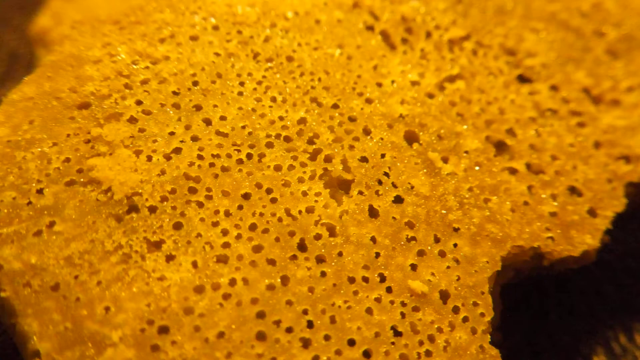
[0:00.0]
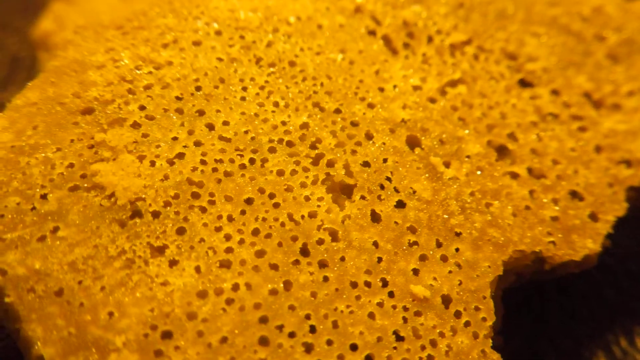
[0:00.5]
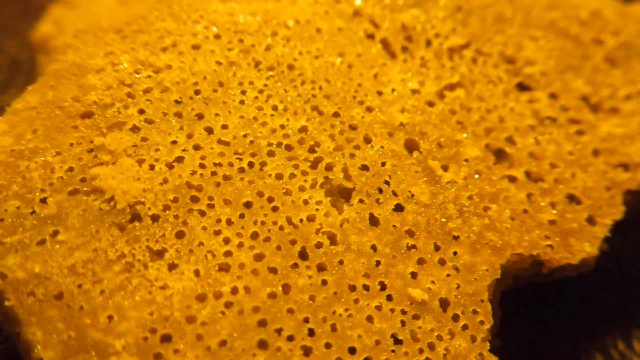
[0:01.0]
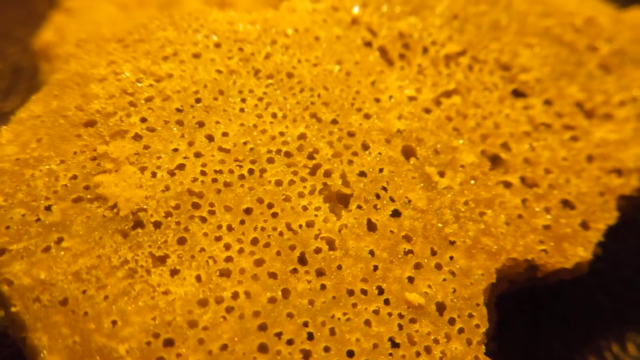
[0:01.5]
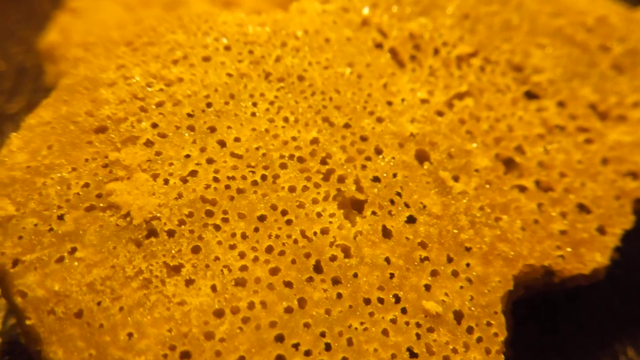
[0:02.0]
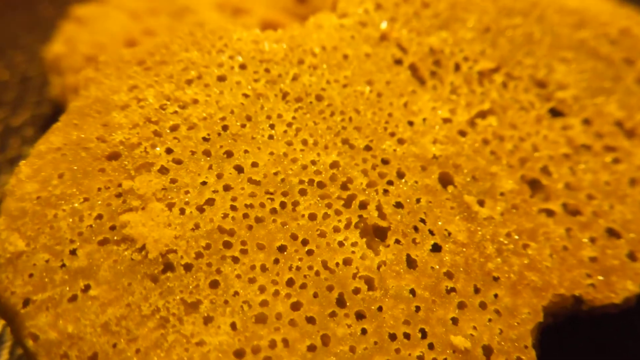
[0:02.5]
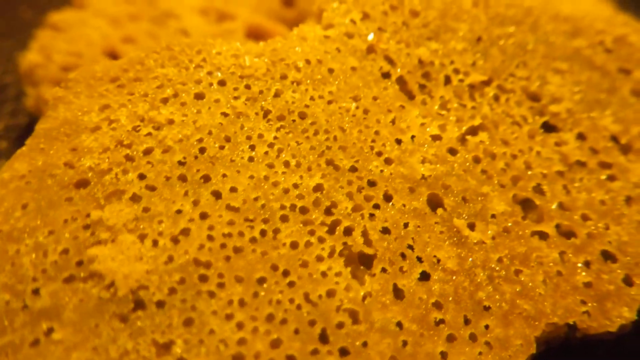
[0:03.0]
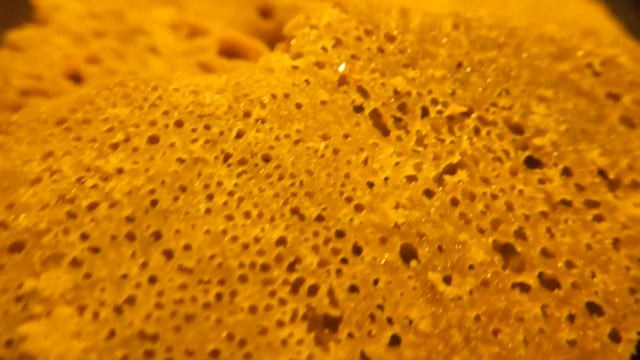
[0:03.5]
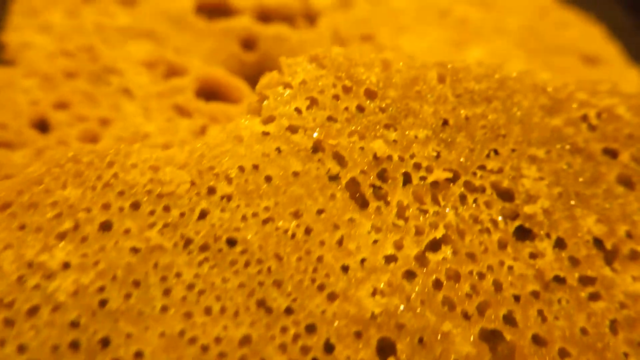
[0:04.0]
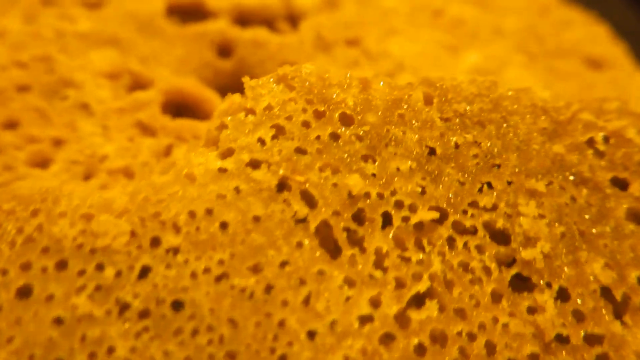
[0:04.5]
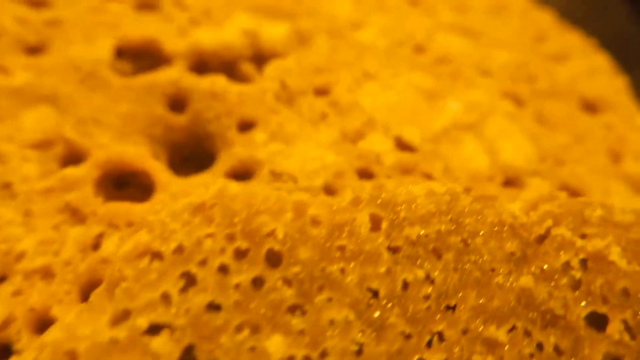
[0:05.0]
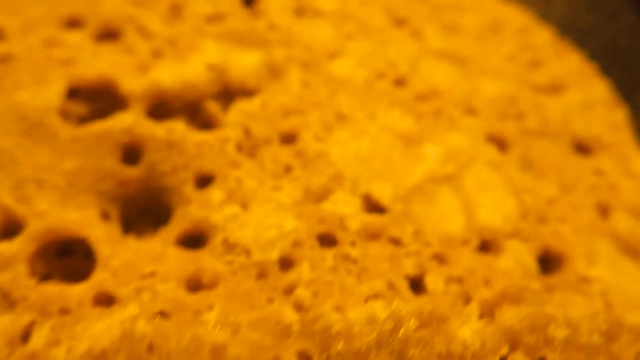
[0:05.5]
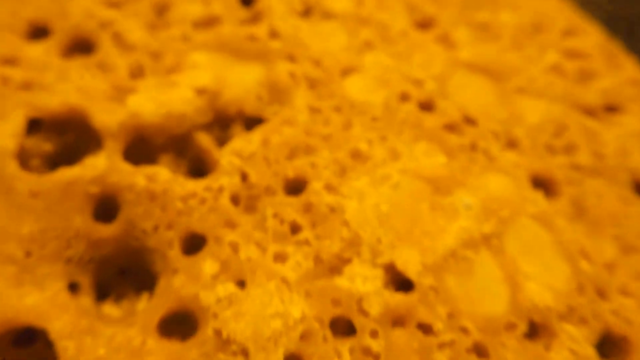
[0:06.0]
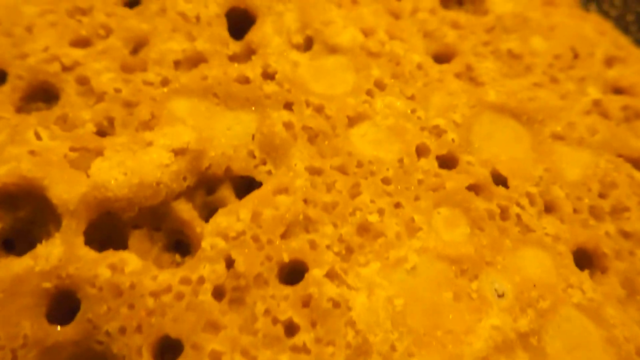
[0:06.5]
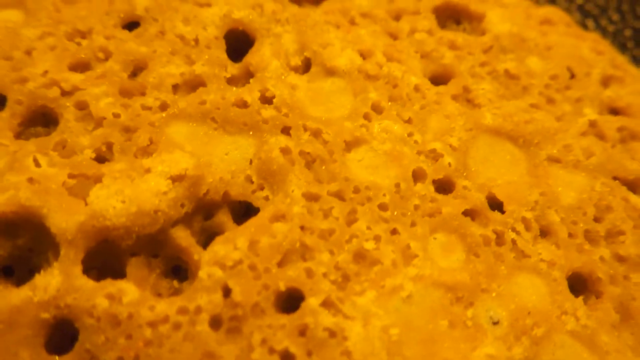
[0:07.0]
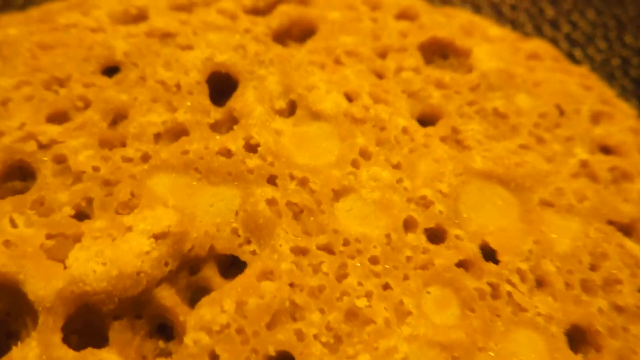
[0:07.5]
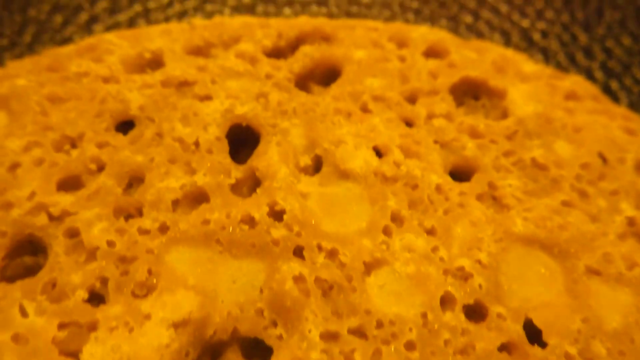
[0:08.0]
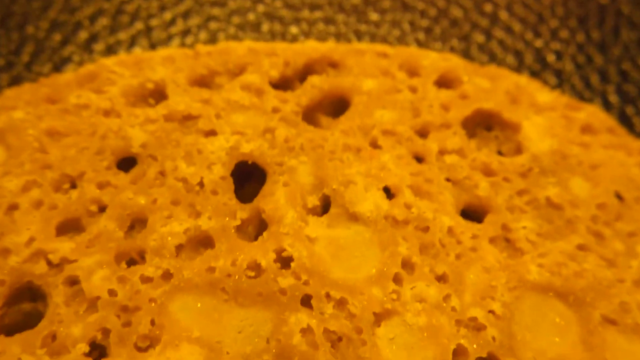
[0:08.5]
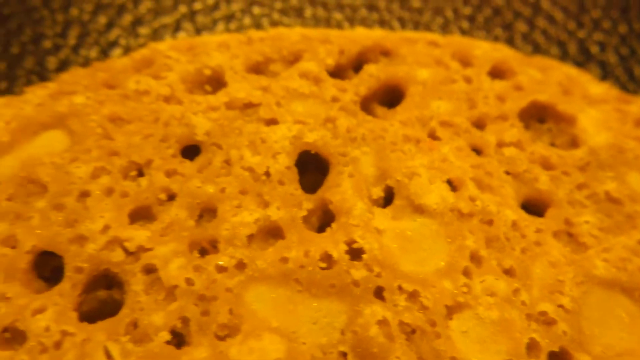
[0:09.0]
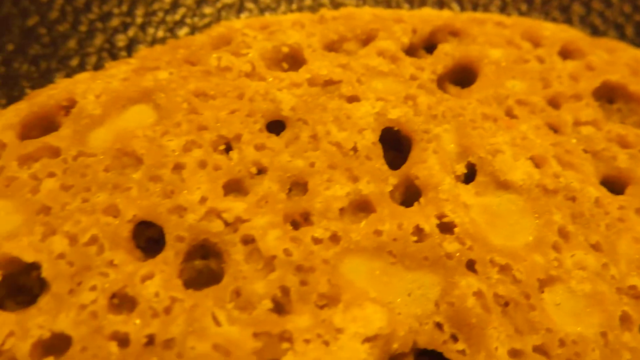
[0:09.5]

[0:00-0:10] A piece of food is shown very close up. It almost looks like a piece of a pancake or something, with lots of holes and nooks and crannies. It is yellow and rests on a surface that looks to have a green tablecloth on it. The food is not round but kind of irregular in shape. The first piece shown has very small holes and nooks and crannies, while a second piece is more round and has larger holes or nooks and crannies.